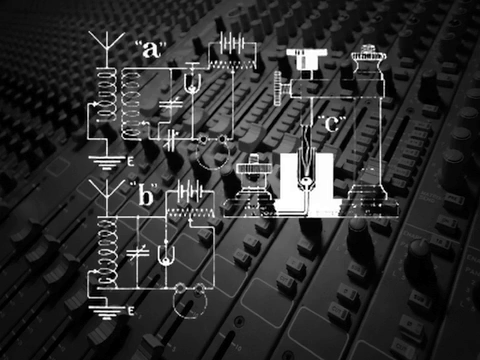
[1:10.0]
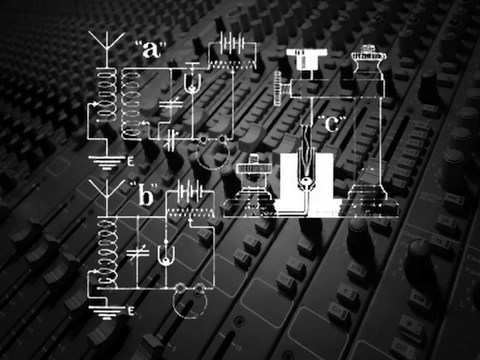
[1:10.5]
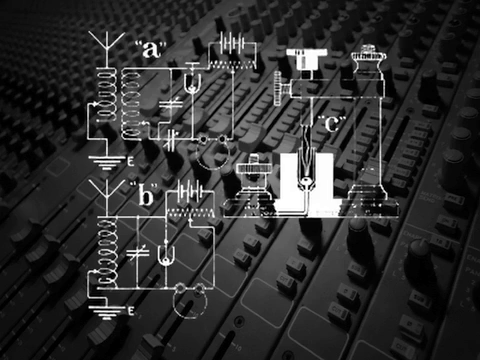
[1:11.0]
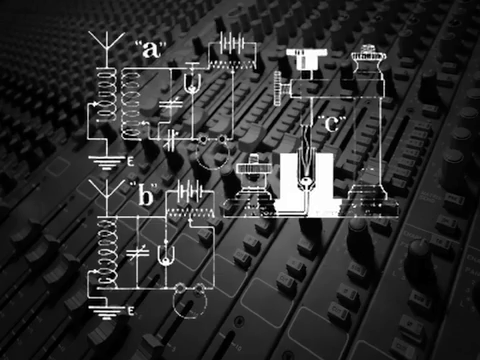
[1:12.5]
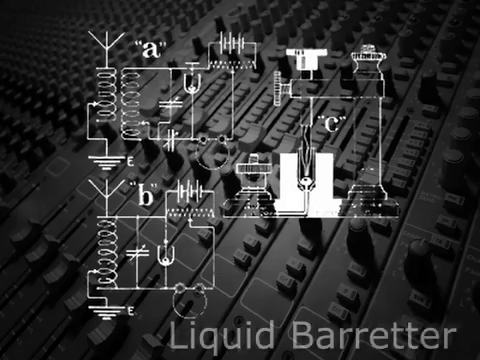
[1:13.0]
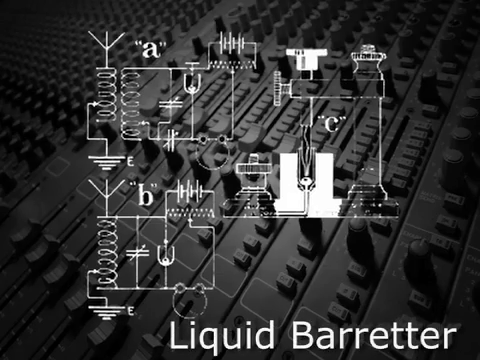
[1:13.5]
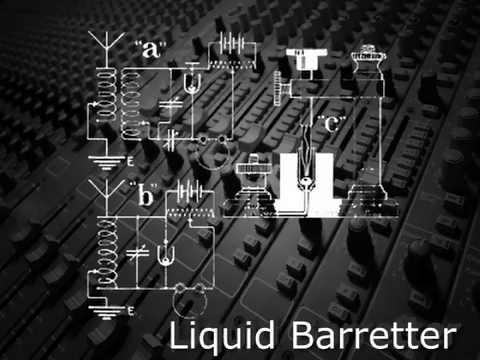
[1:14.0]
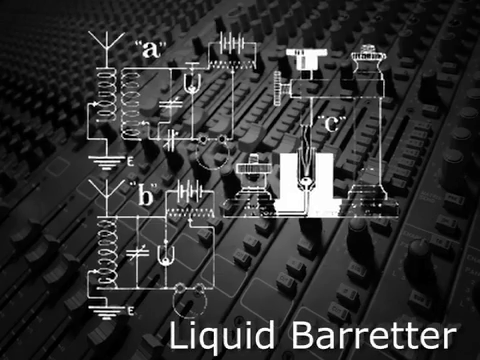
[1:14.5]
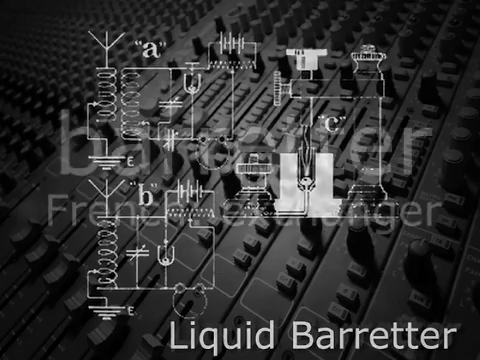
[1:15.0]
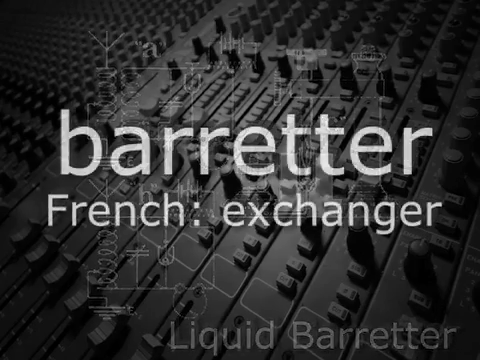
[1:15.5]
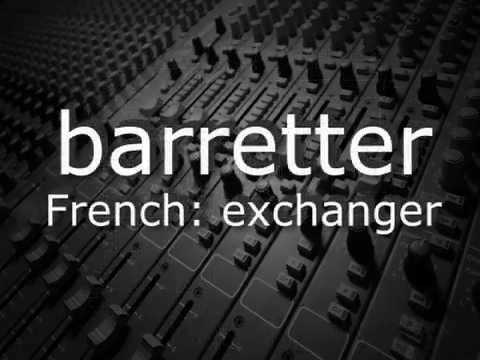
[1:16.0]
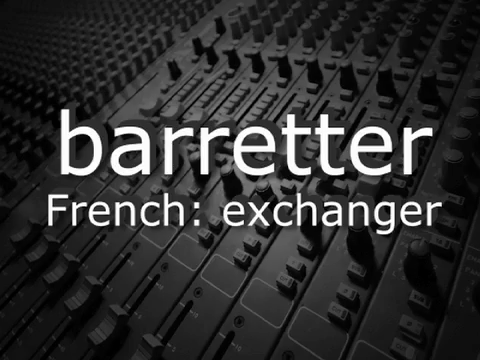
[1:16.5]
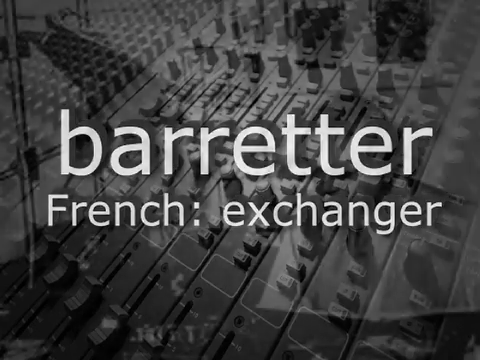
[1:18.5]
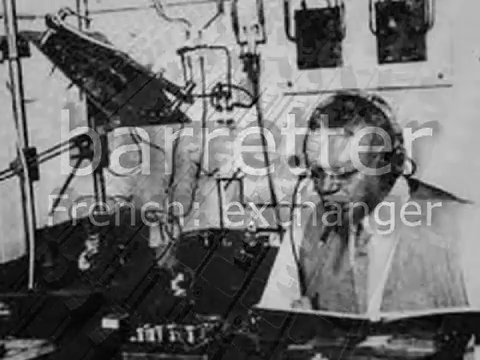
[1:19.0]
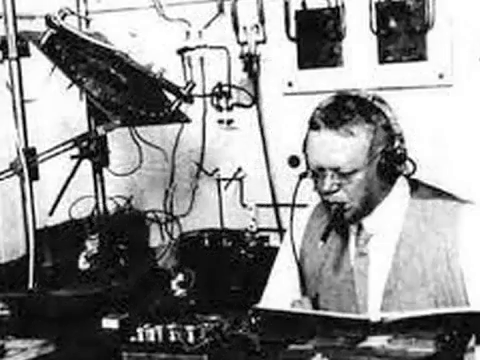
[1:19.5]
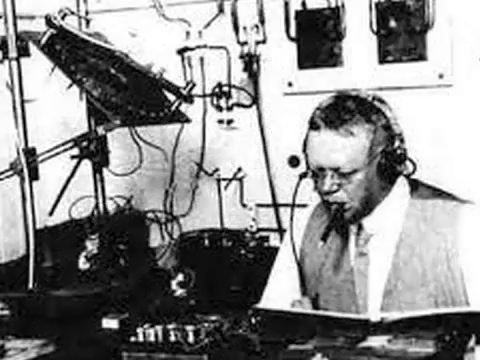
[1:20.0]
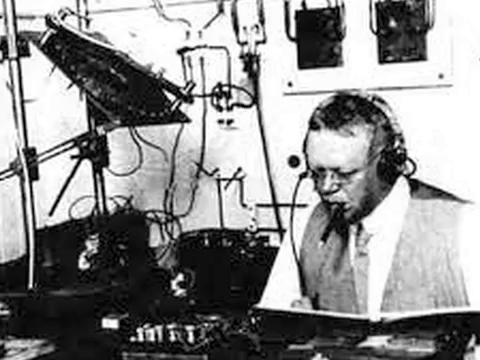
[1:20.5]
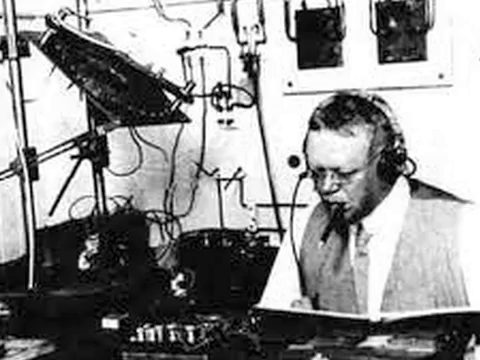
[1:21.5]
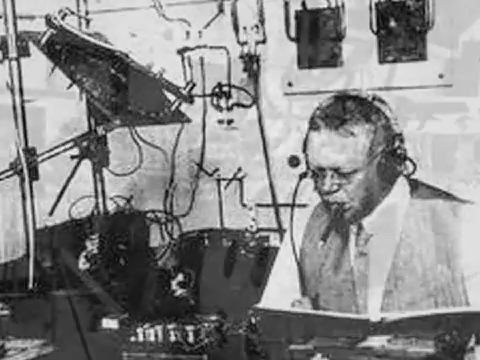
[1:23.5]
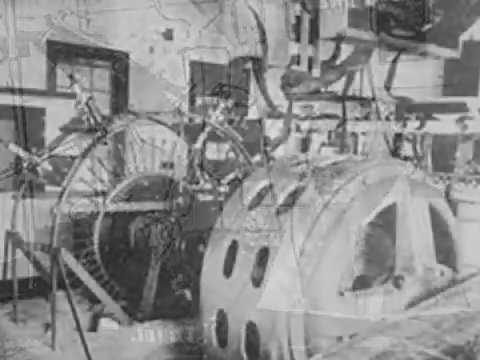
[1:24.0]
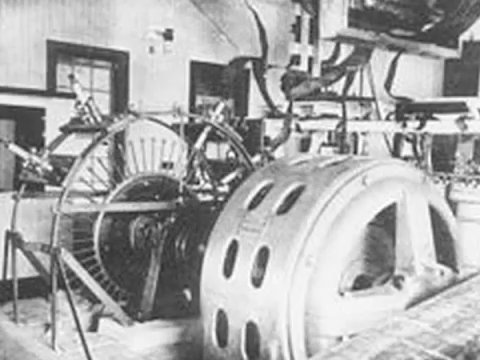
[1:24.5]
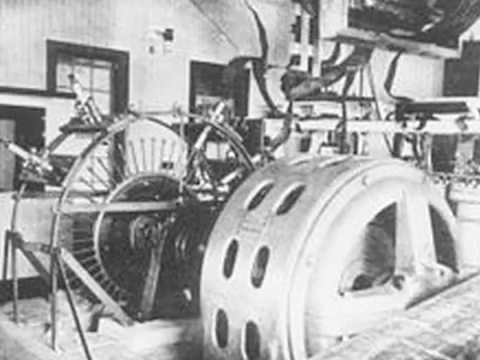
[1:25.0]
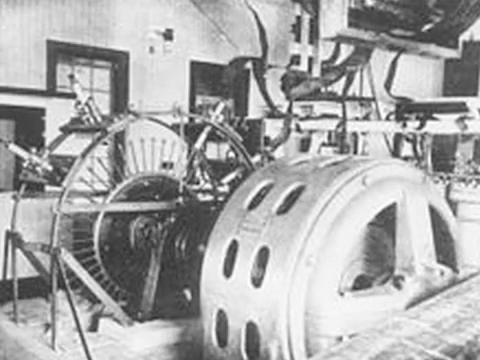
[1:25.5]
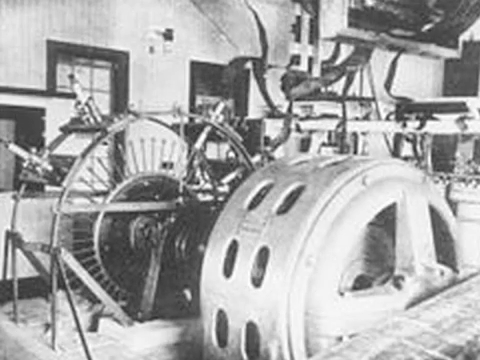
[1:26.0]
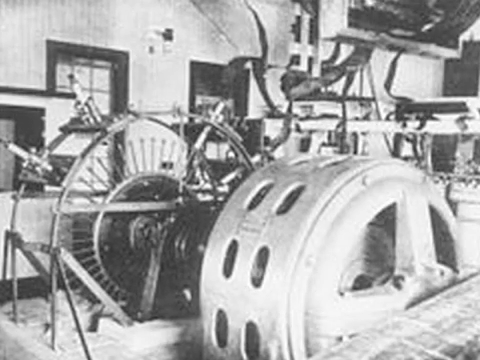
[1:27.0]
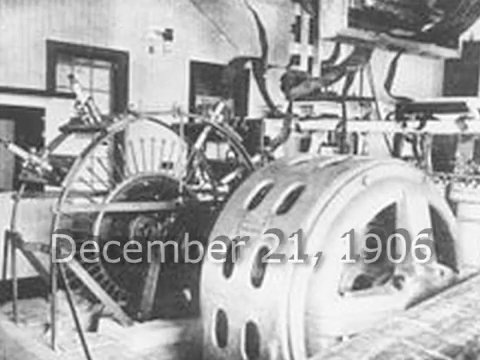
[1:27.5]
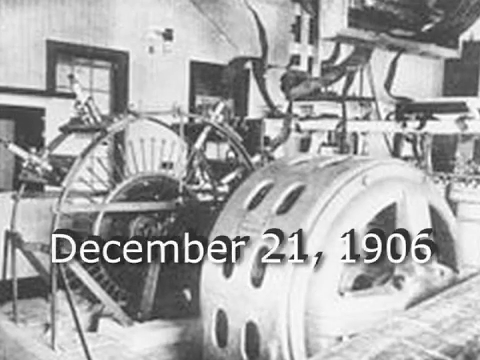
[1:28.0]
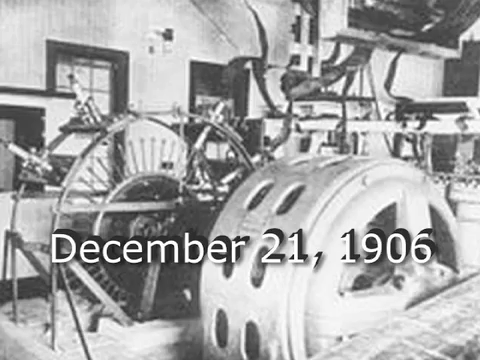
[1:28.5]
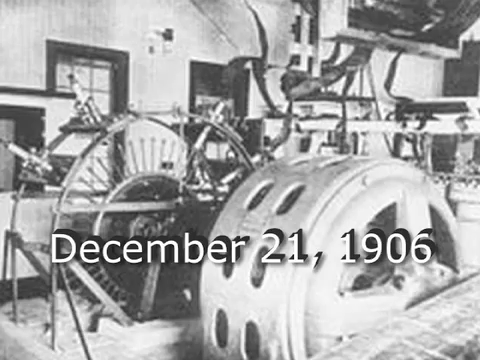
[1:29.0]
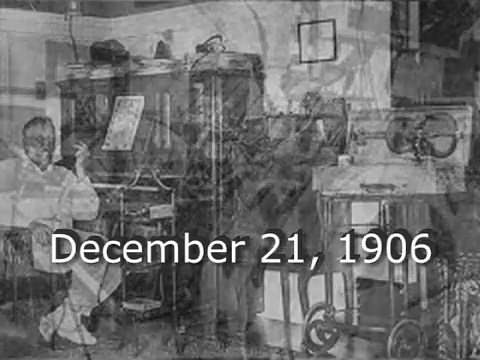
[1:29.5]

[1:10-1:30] Continuing from the design, several black-and-white images pass quickly, accompanied by the date "December 21st, 1906." The images include an older gentleman with glasses. In the room he is in, a wheel-like machine is attached to wiring and other things up above. He is occupied with these wired things, with something almost like a headset, though not really a headset.